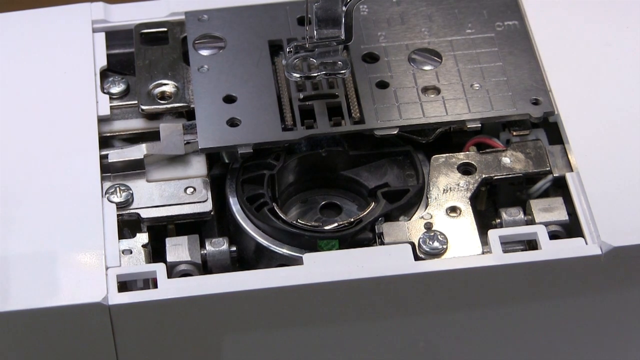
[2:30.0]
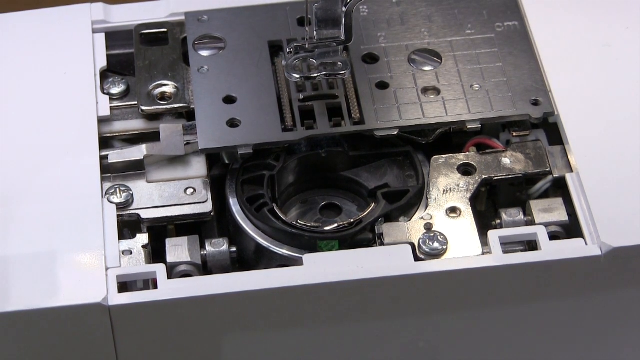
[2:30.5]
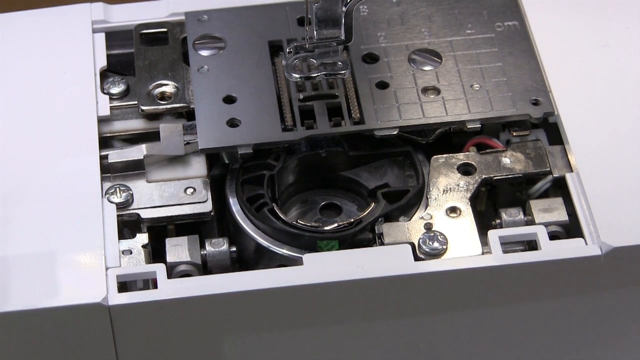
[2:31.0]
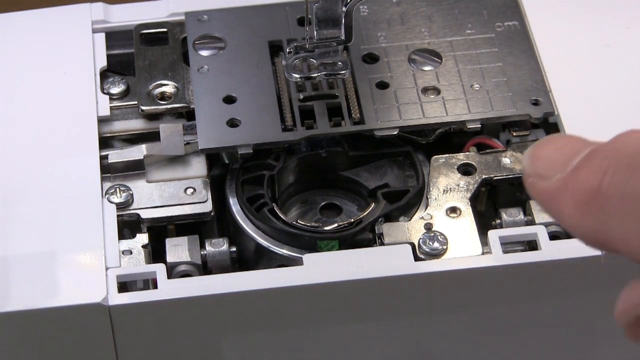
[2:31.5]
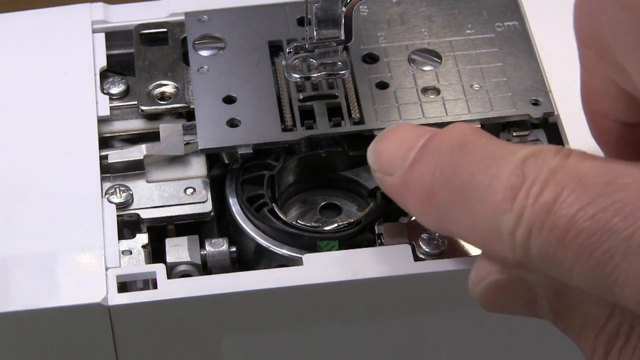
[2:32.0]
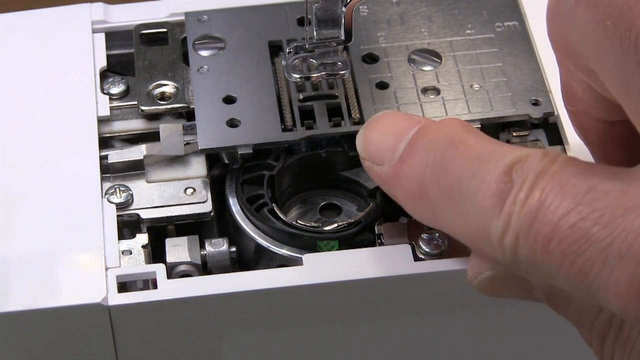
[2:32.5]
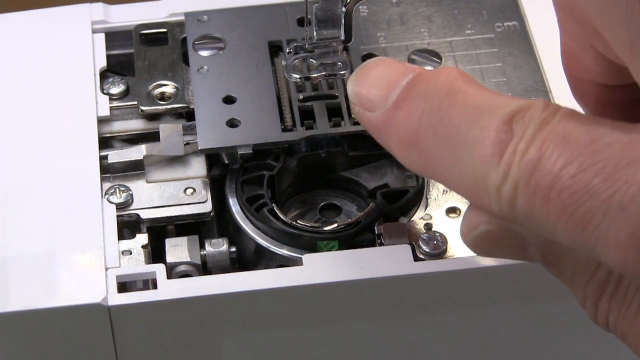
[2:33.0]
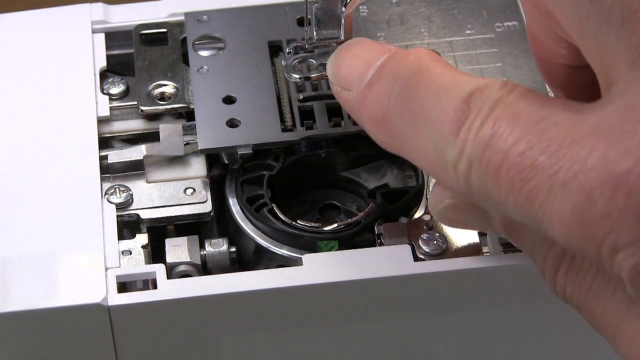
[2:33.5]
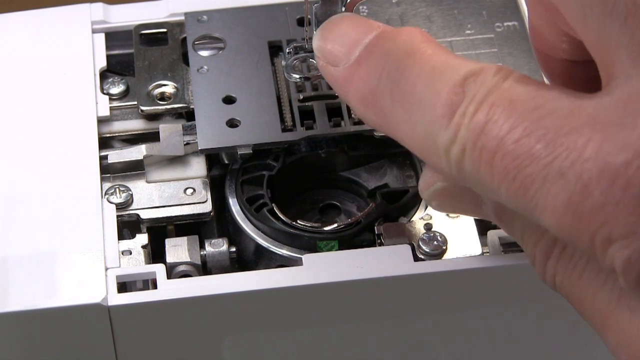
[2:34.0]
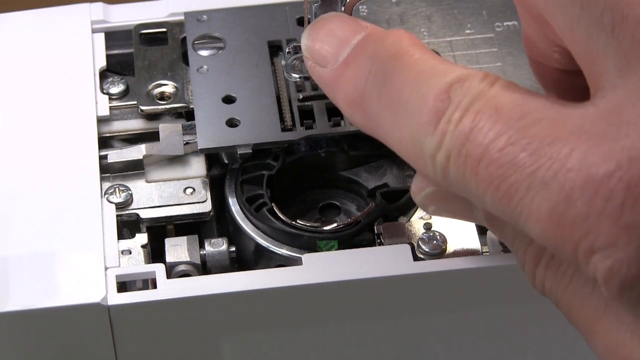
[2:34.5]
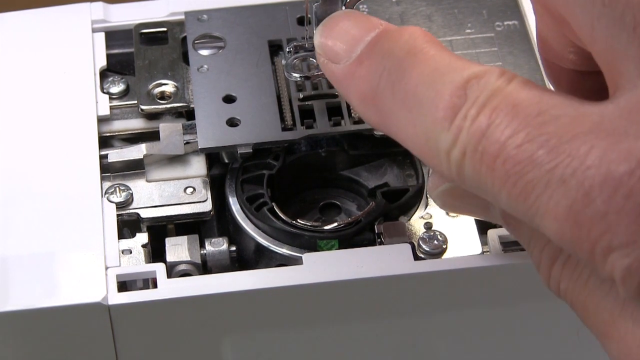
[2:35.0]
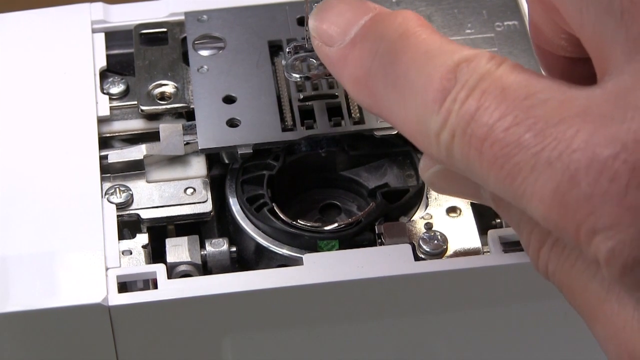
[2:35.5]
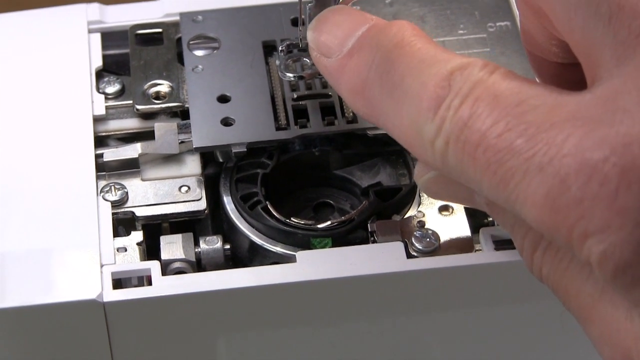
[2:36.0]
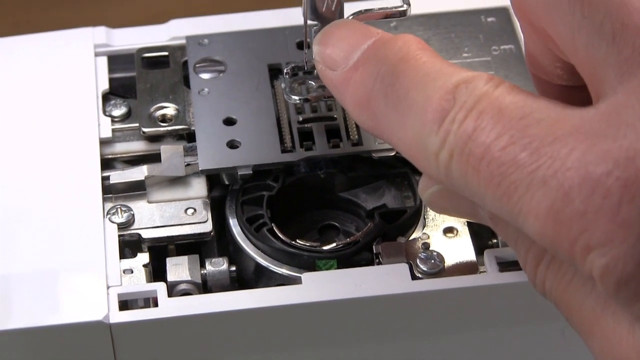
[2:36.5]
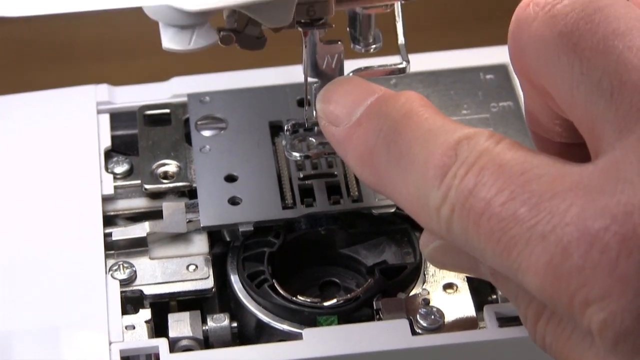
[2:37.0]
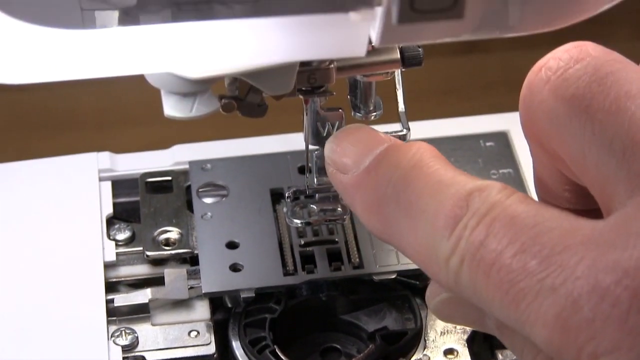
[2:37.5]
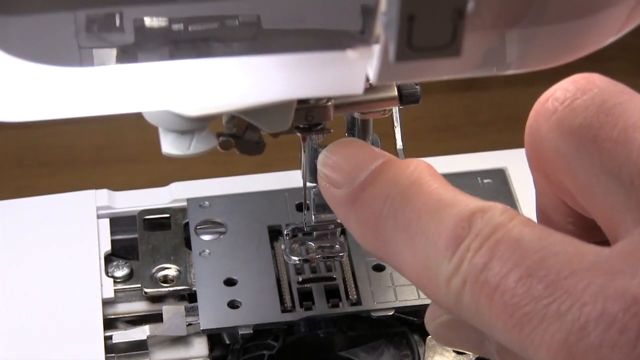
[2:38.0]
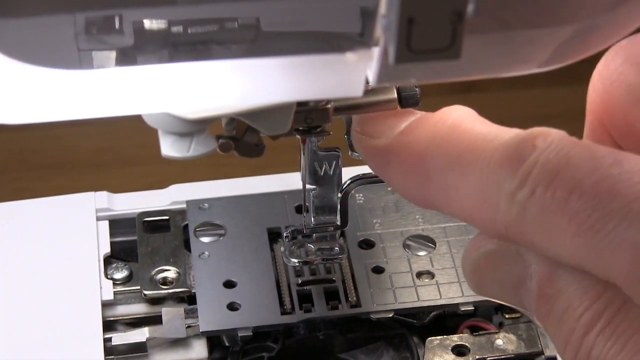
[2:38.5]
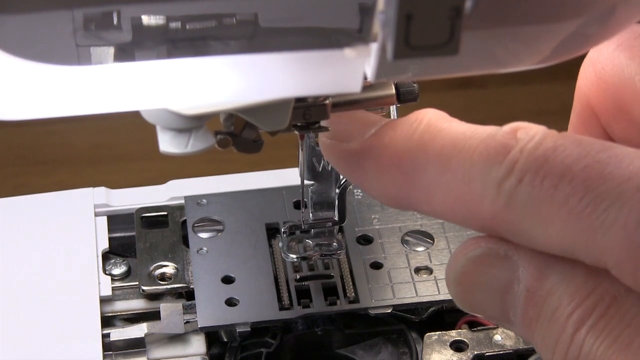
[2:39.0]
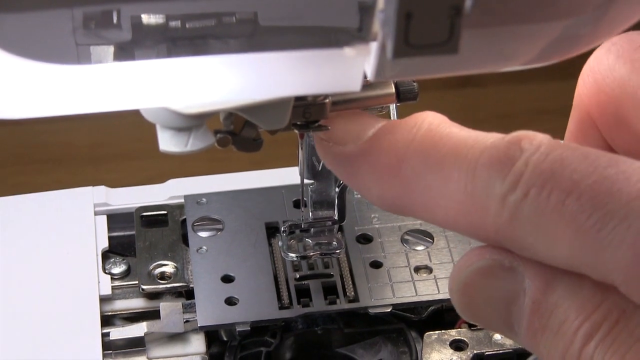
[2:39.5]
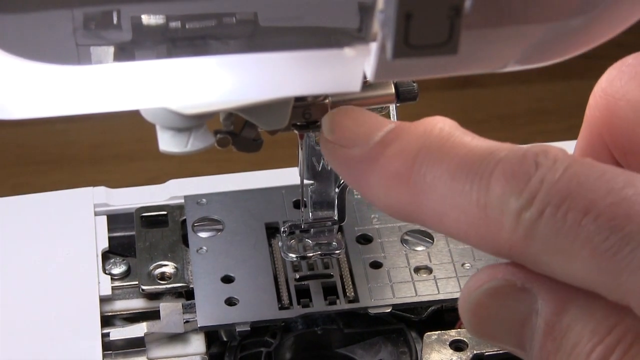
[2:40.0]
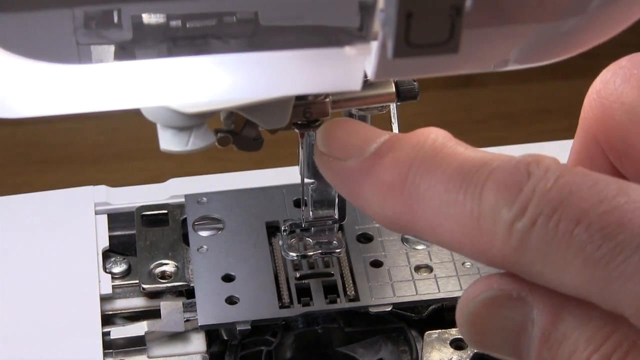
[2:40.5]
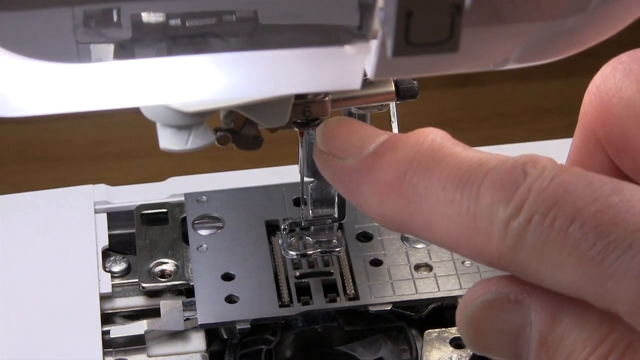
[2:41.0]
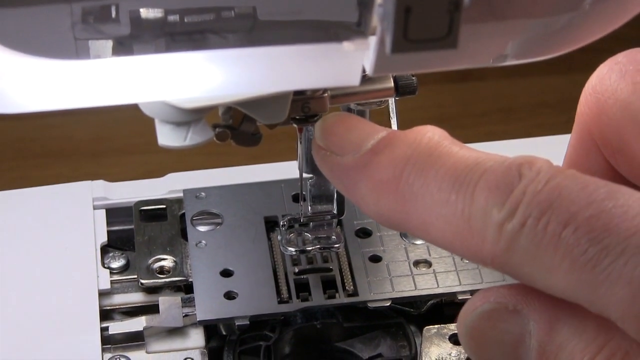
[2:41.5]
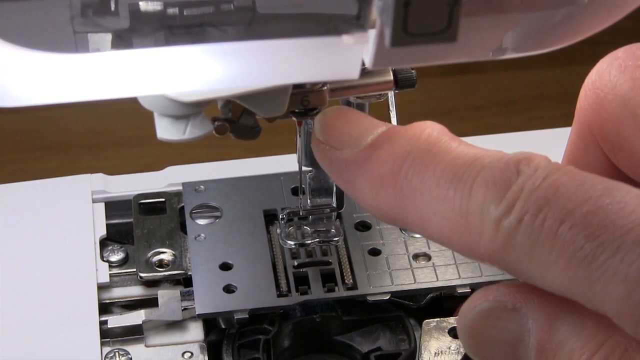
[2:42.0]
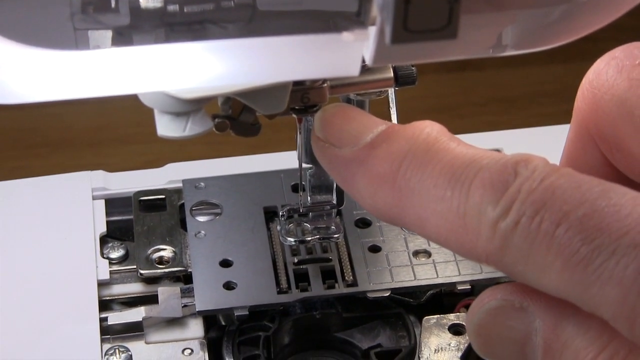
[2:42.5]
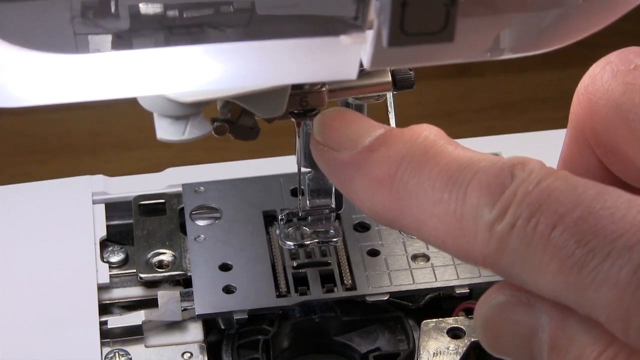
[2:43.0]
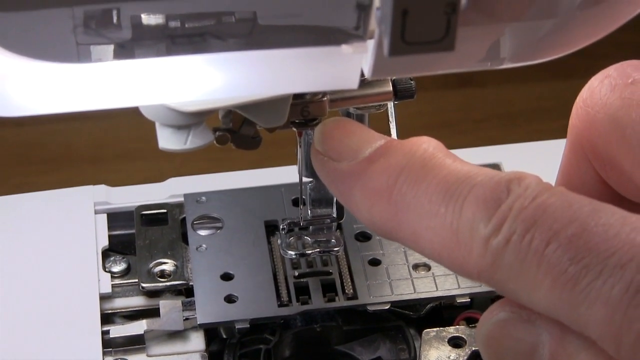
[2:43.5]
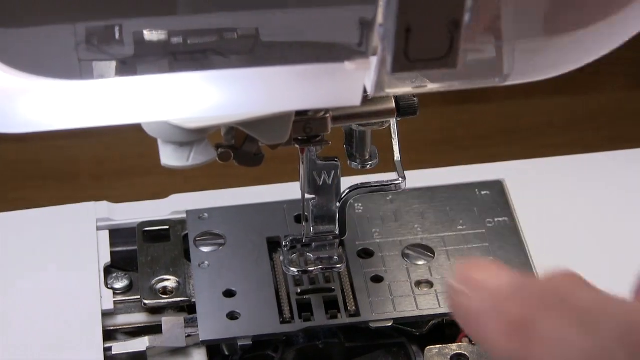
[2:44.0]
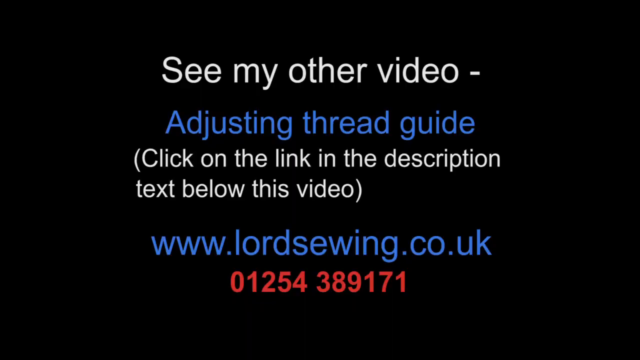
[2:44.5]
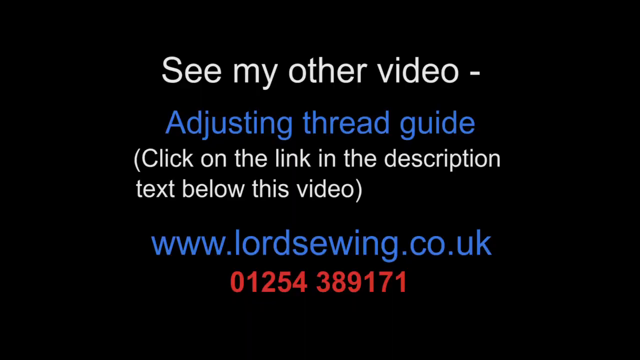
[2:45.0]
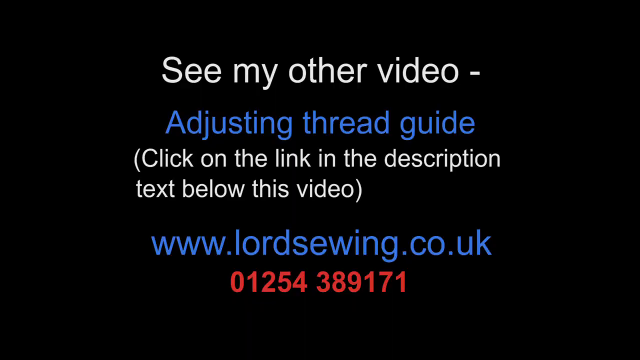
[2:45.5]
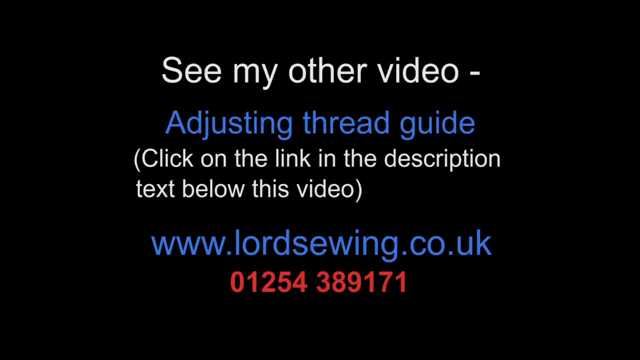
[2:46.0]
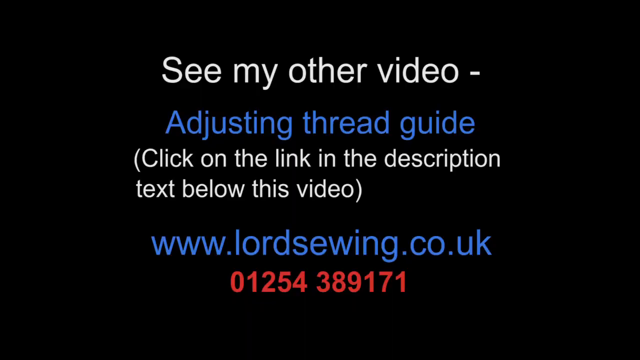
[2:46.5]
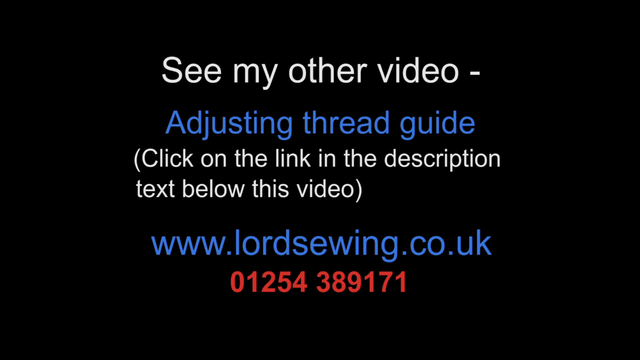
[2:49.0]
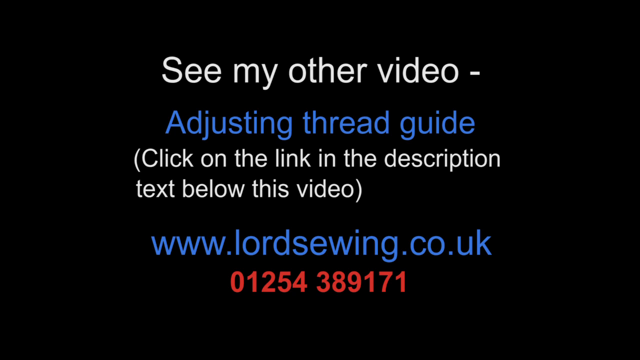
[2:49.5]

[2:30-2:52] The sewing machine is shown with the top piece the needle goes through; the needle is there but not going through the hole. Underneath is the metal plate, along with the other plastic parts of the machine and the bobbin, which is mostly assembled at this point. The man points with his finger to the upper piece where the needle goes through and touches the needle. It looks like he has fixed the problem. The video ends with a black screen showing white letters that read "see my other video." Underneath, "adjusting thread guide" appears in blue, followed in parentheses by "click on the link in the description text below this video," and below that the website www.lordsewing.co.uk and the phone number 01254389171.